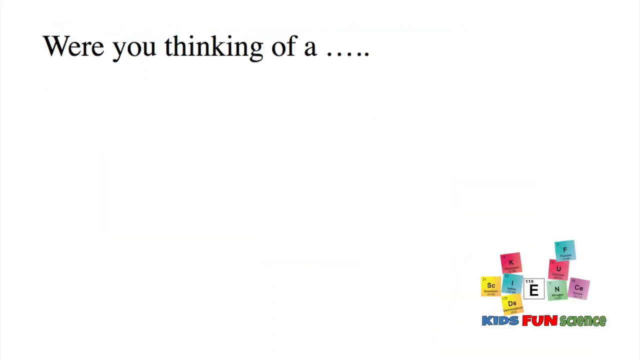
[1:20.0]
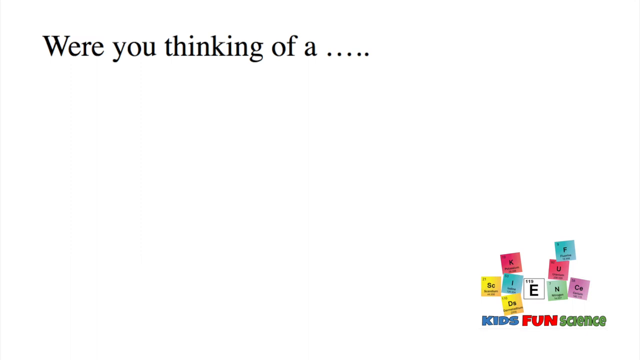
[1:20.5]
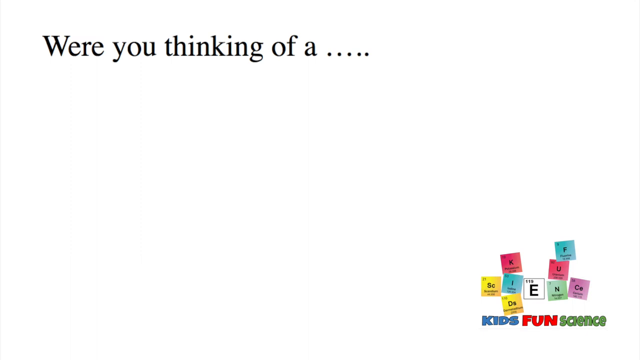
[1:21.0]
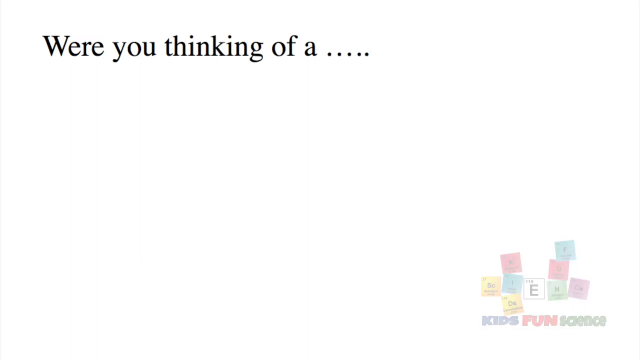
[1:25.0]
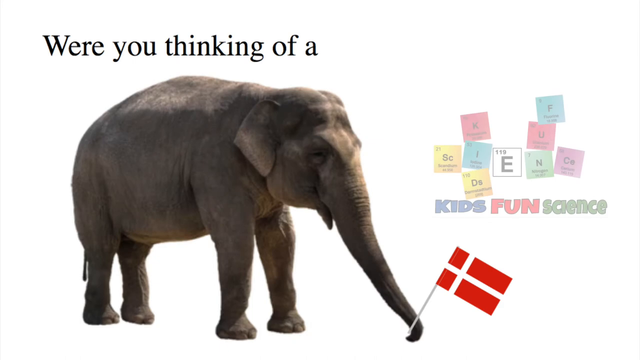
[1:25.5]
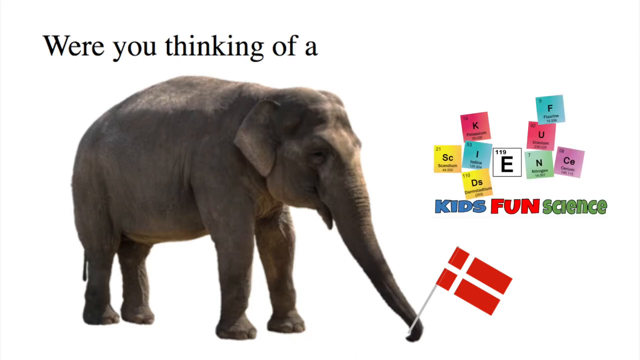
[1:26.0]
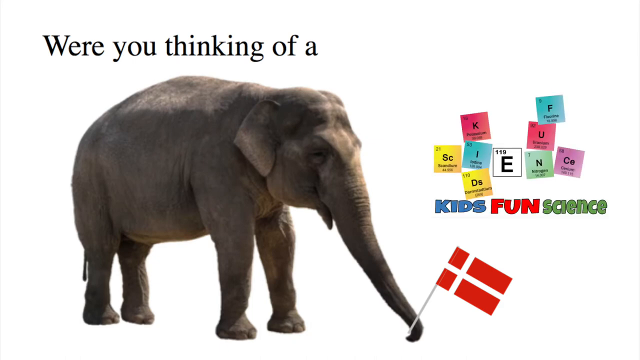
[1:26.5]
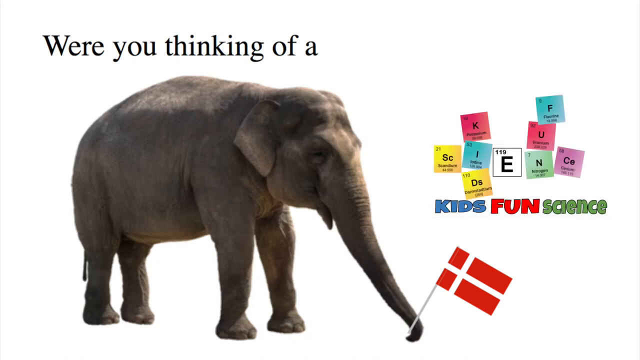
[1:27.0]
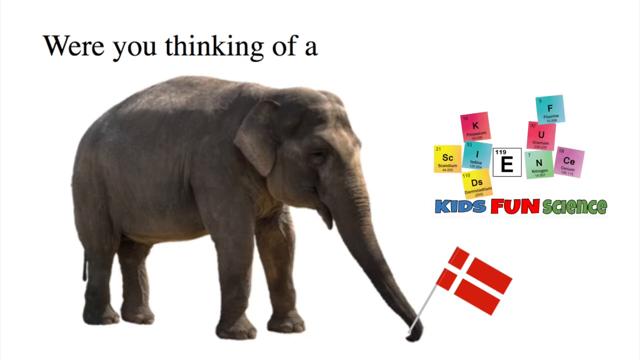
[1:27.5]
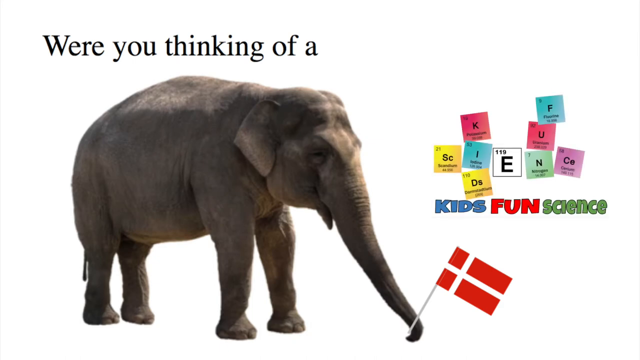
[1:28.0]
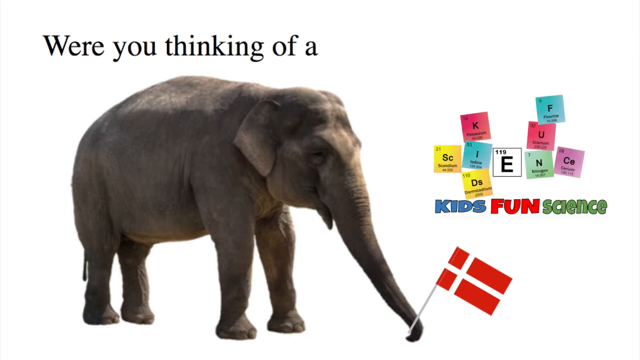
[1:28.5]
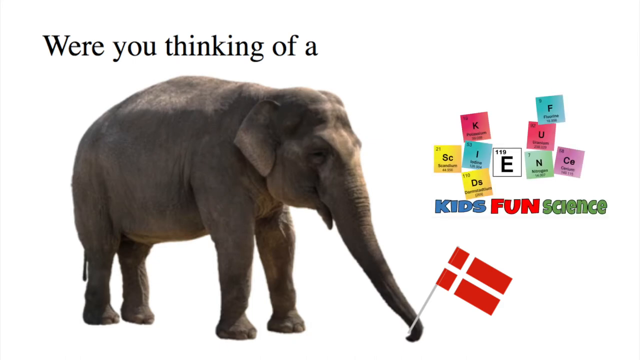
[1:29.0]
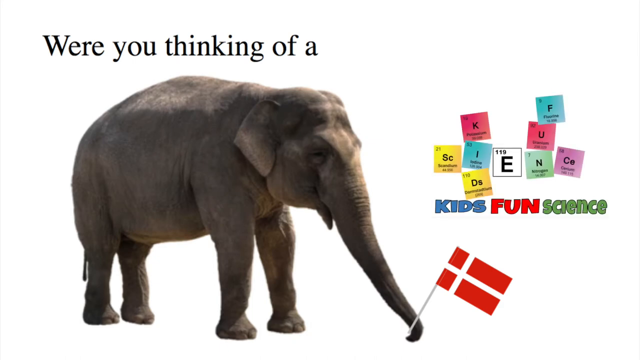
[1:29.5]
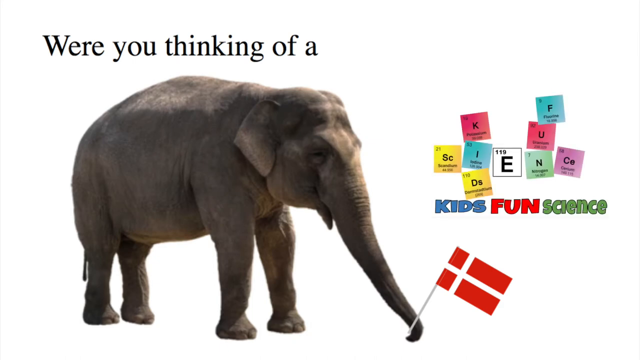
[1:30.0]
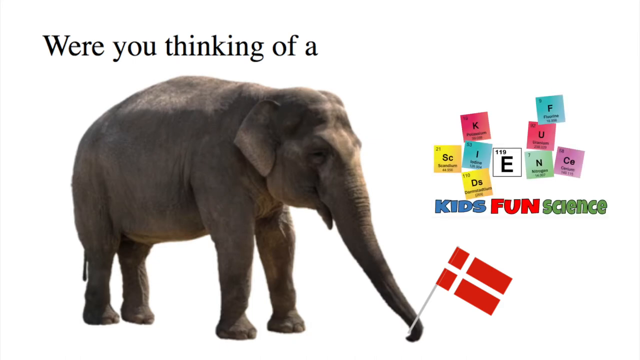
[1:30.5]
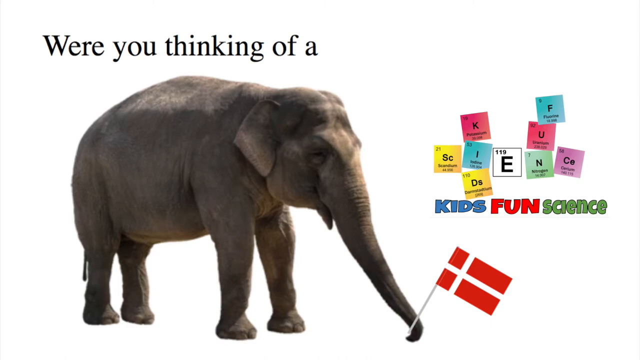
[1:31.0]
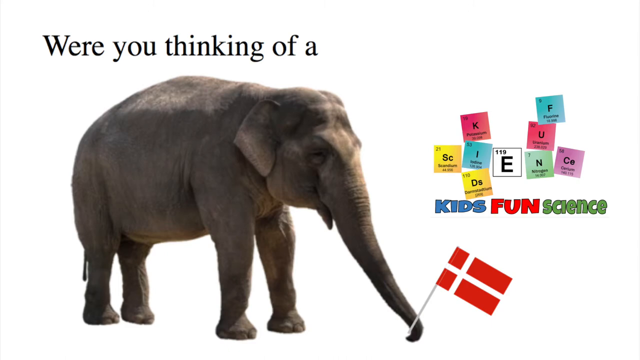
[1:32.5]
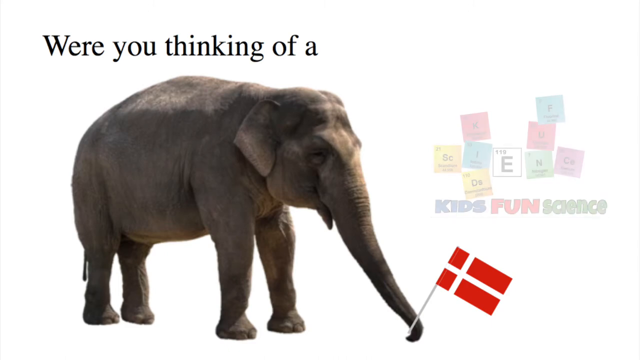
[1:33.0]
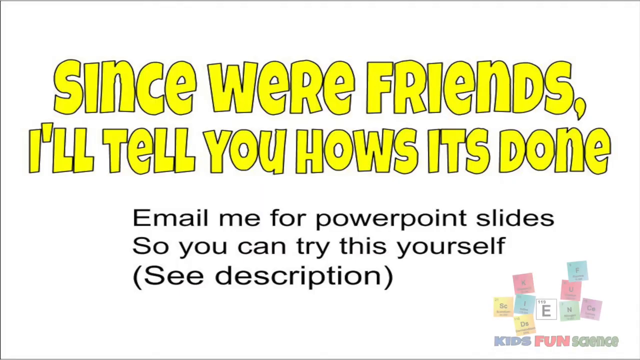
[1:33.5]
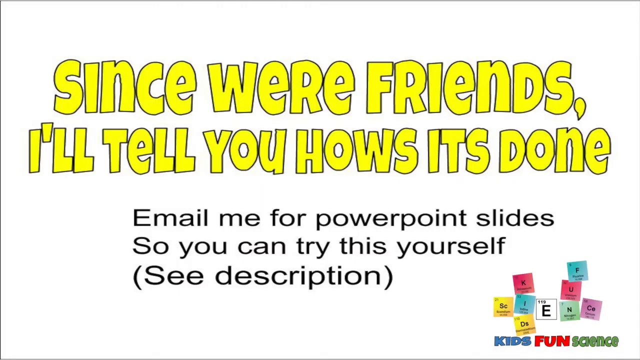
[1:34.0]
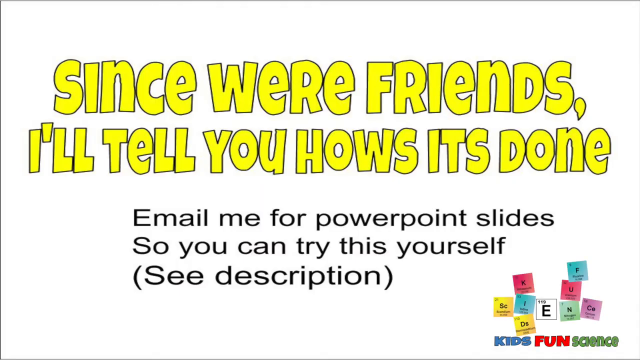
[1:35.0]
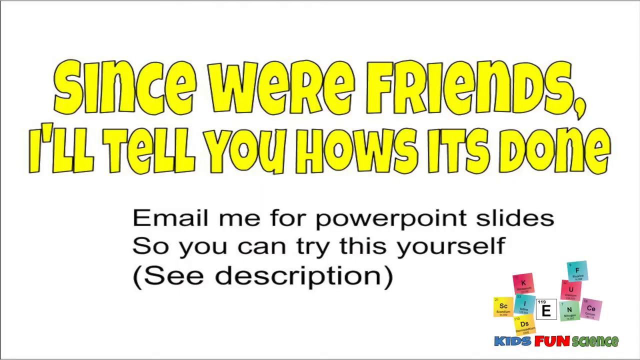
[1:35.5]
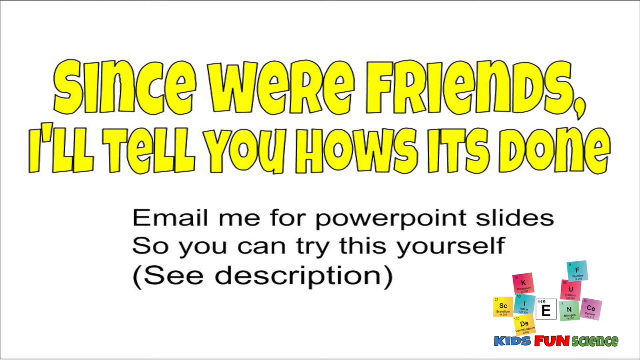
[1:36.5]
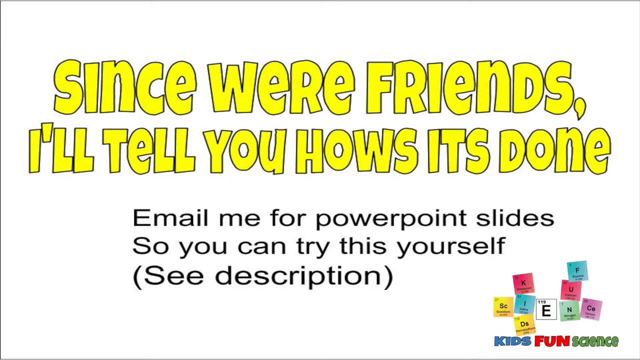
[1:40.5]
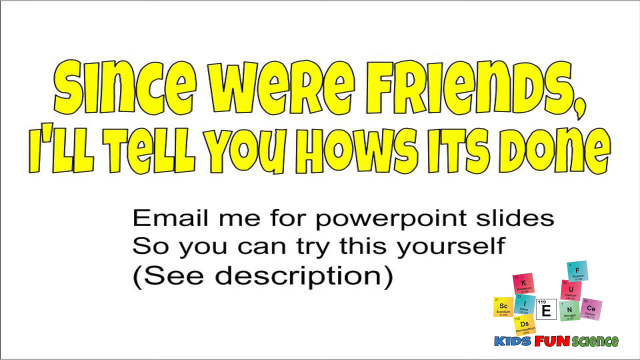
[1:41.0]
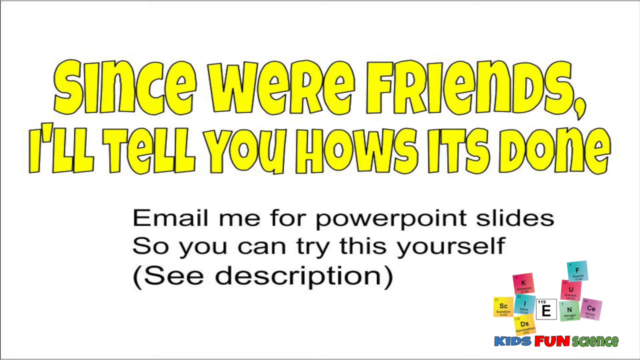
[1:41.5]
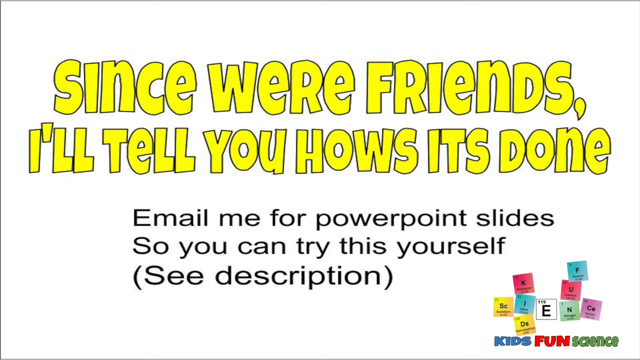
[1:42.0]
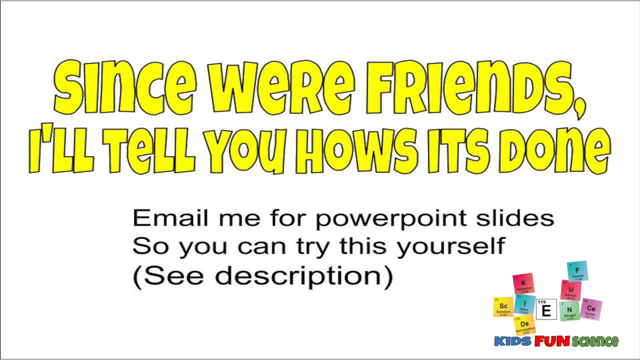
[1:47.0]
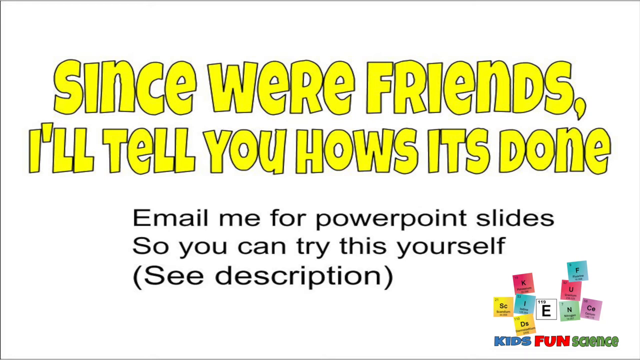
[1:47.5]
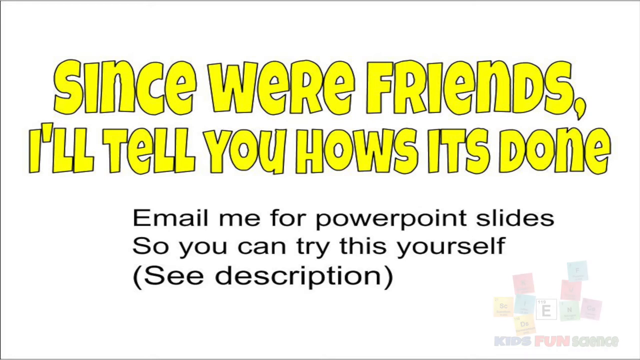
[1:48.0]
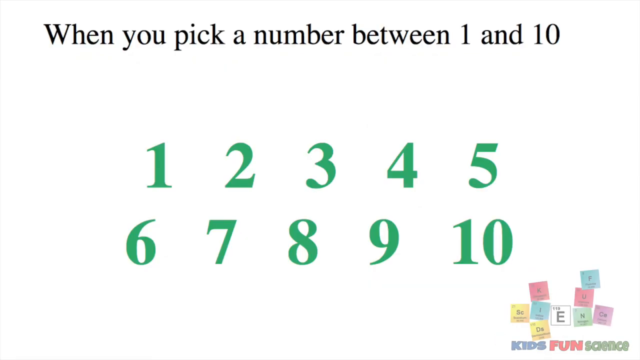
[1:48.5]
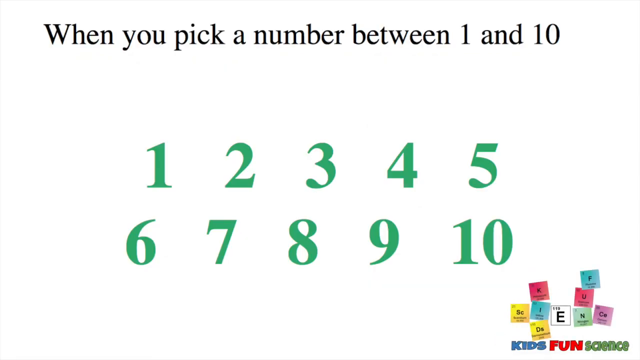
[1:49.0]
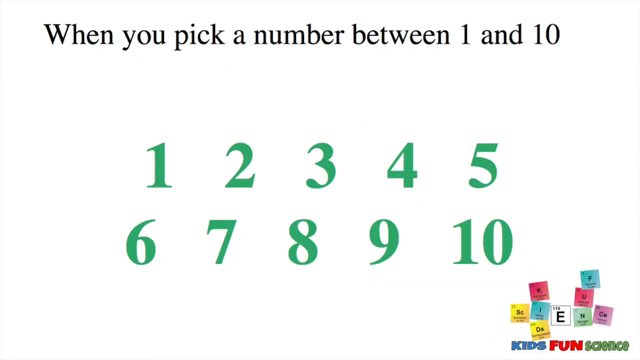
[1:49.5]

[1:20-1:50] The screen reads "Were you thinking of a" and shows an elephant with a flag. Text follows: "Since we're friends, I'll tell you how it's done. Email me for powerpoint slides so you can try this for yourself. See description." Then it reads "When you pick a number between 1 and 10," with the numbers 1 through 10 shown.